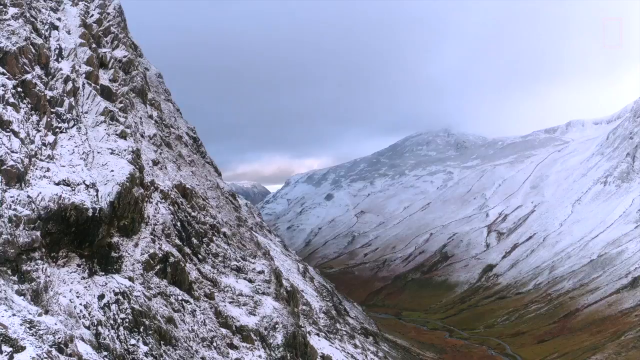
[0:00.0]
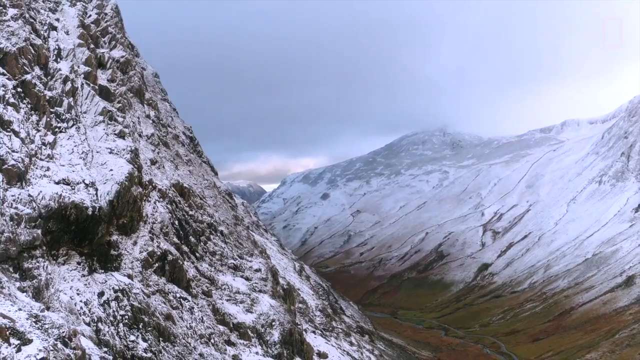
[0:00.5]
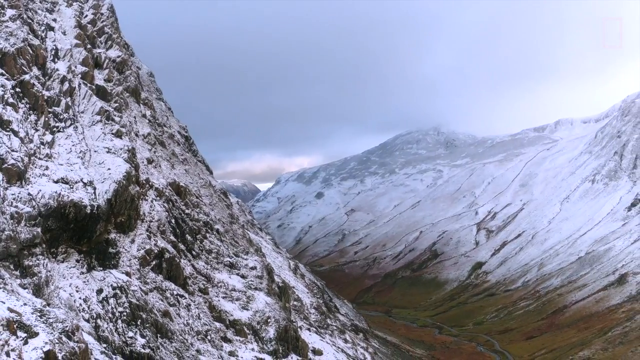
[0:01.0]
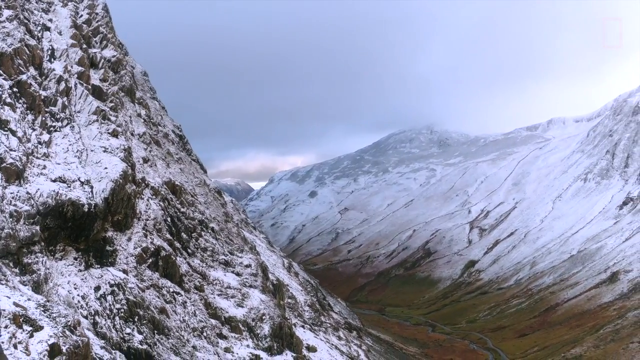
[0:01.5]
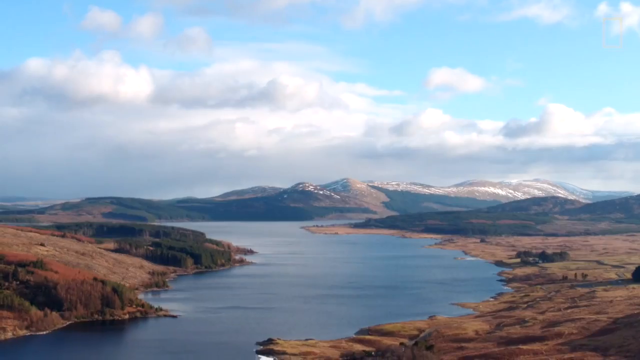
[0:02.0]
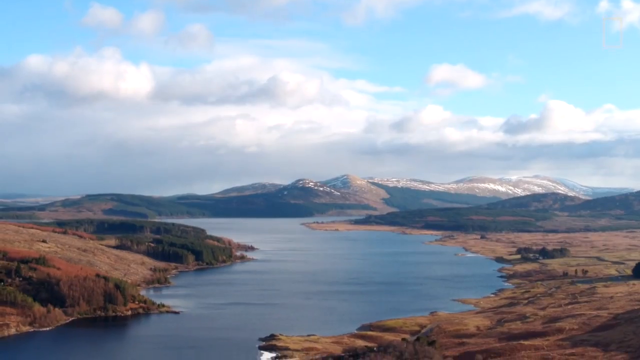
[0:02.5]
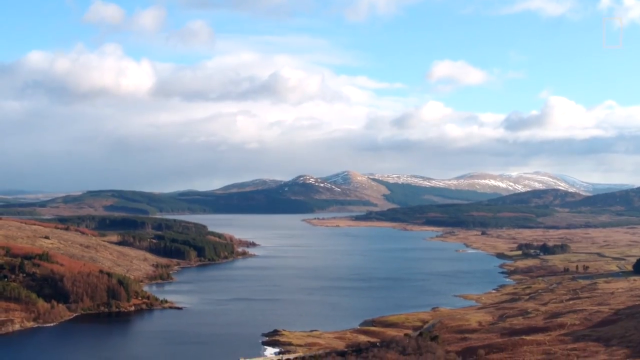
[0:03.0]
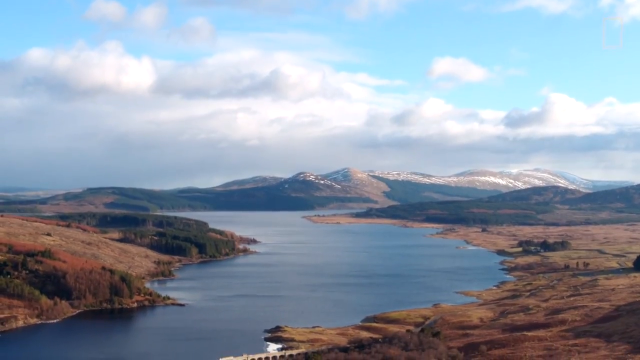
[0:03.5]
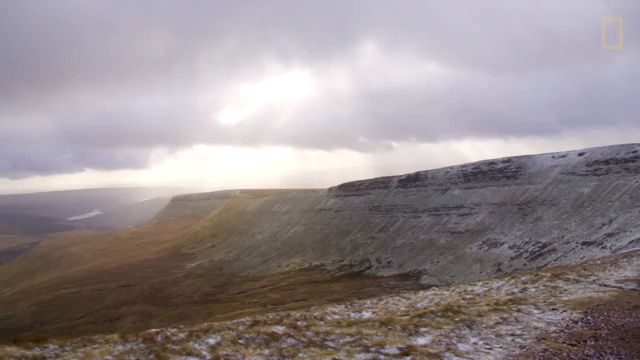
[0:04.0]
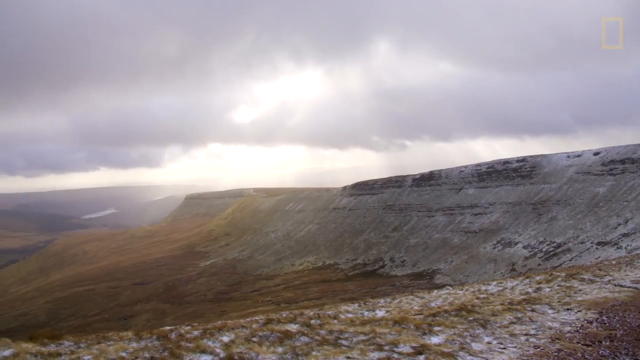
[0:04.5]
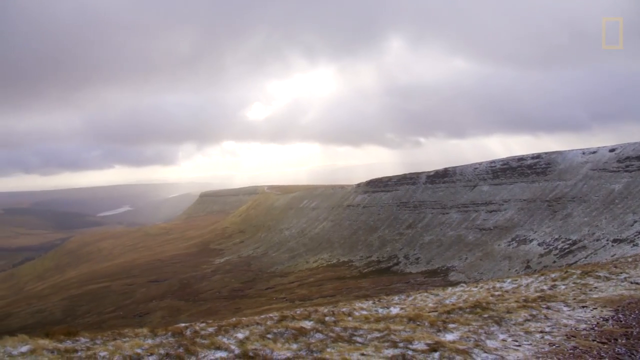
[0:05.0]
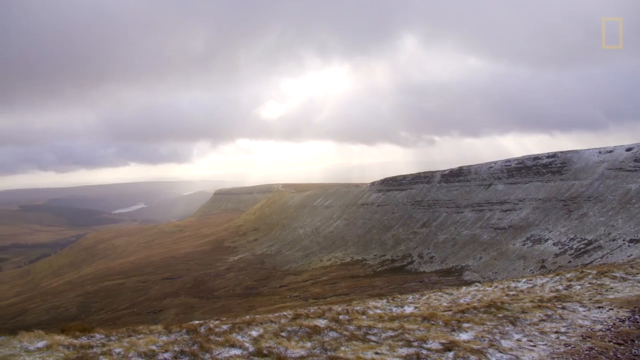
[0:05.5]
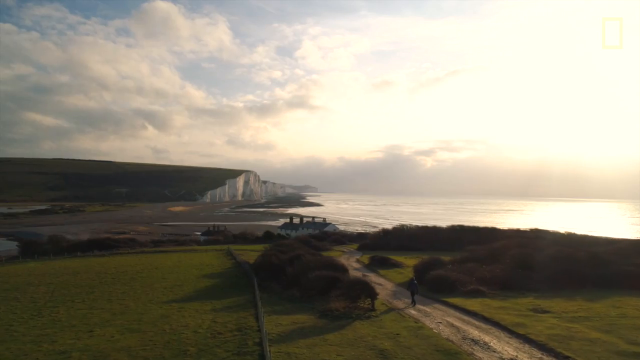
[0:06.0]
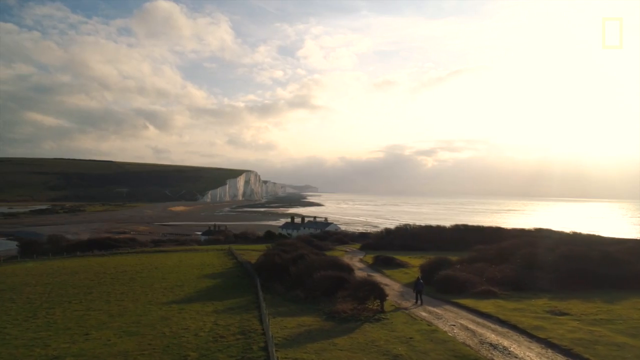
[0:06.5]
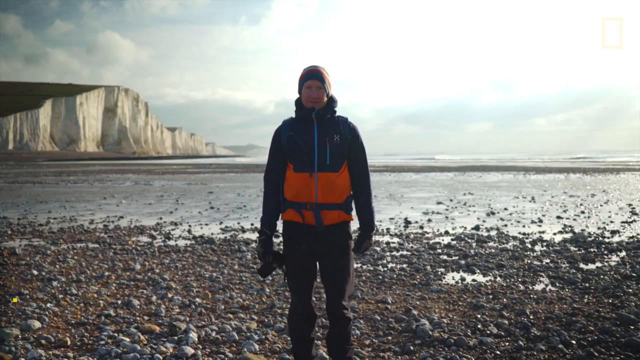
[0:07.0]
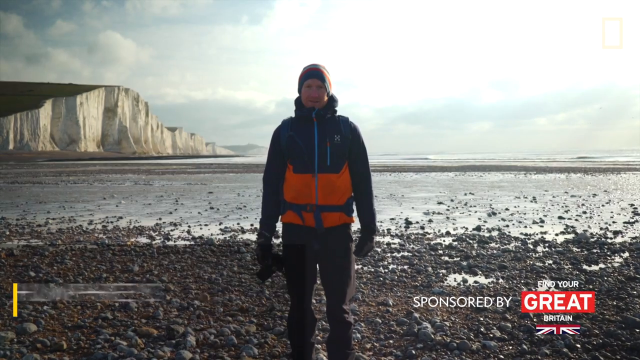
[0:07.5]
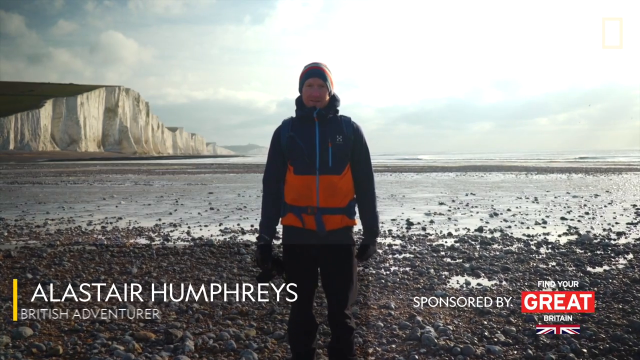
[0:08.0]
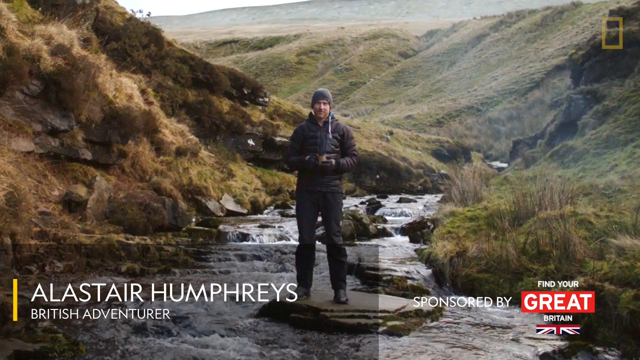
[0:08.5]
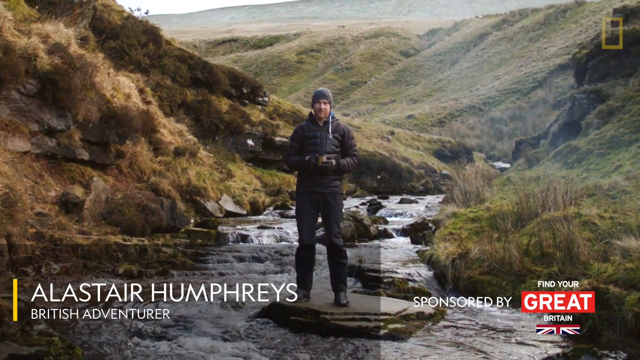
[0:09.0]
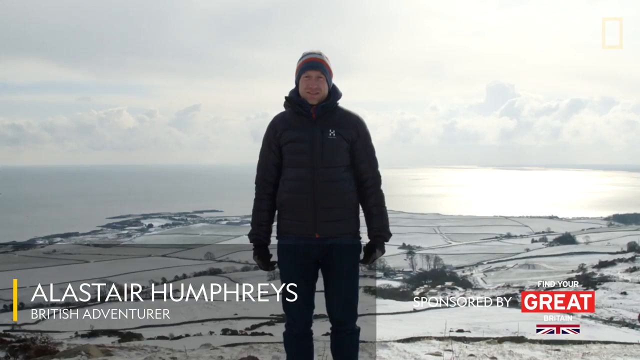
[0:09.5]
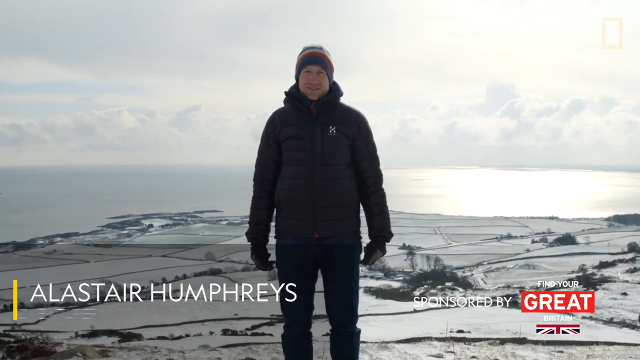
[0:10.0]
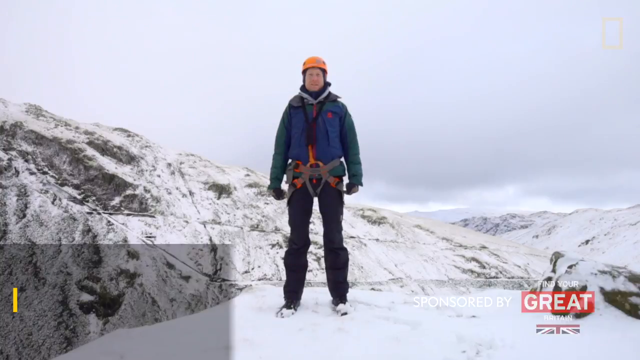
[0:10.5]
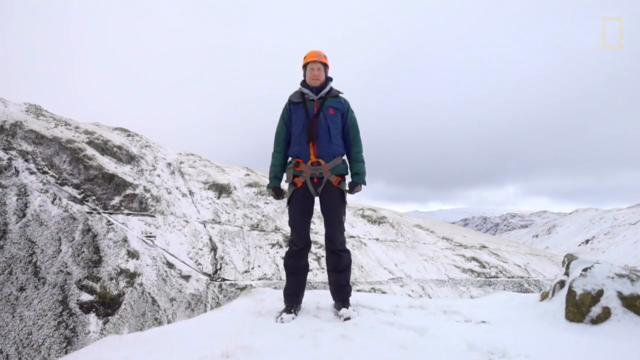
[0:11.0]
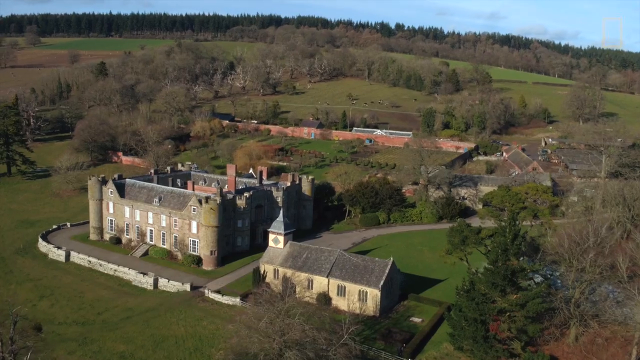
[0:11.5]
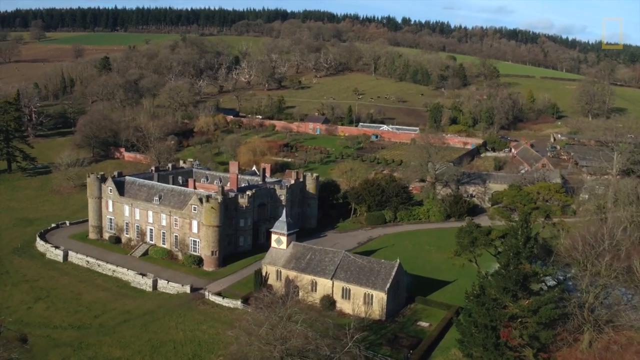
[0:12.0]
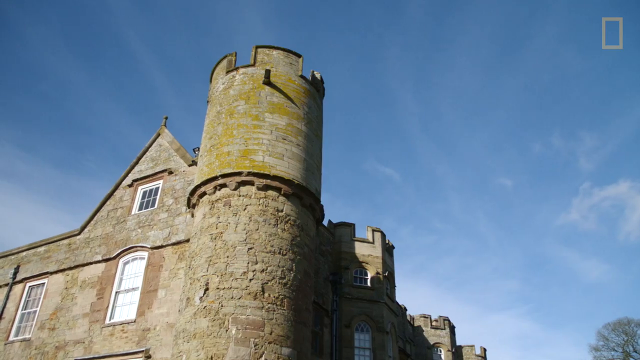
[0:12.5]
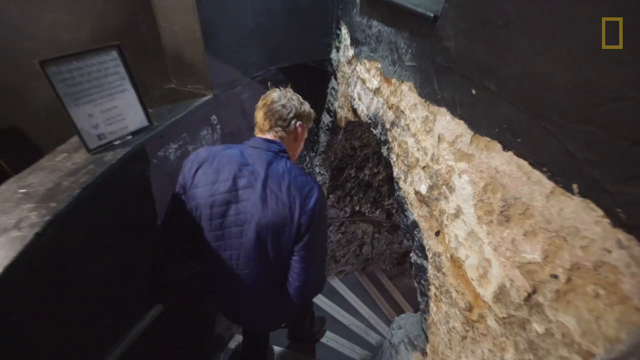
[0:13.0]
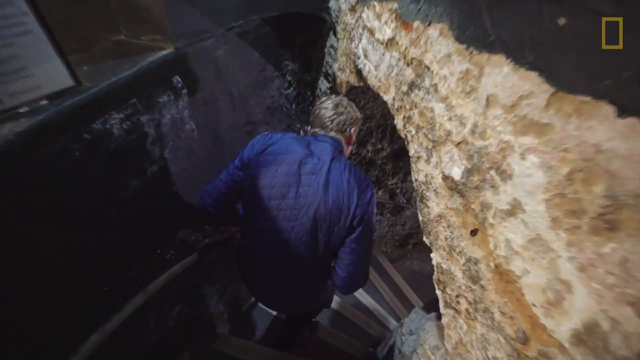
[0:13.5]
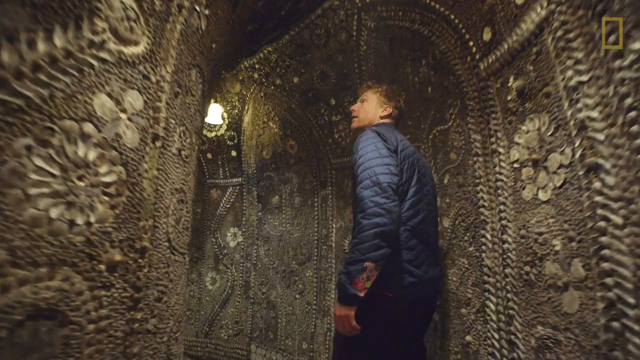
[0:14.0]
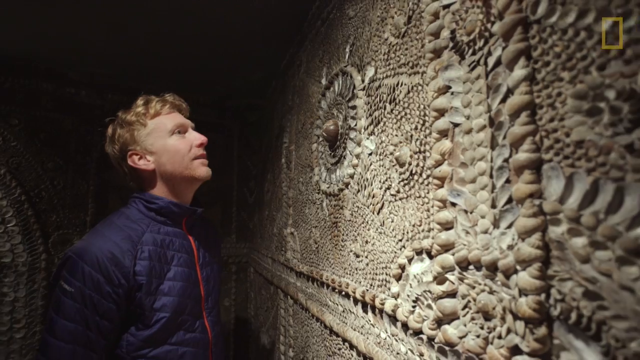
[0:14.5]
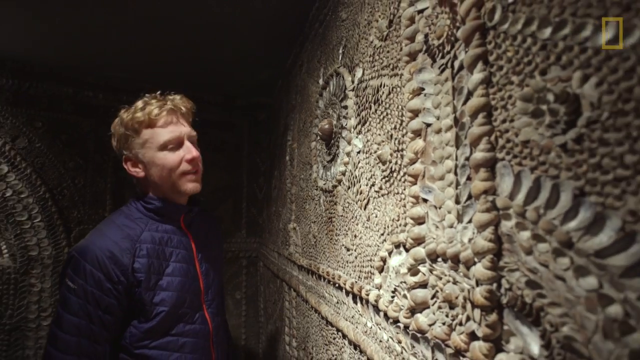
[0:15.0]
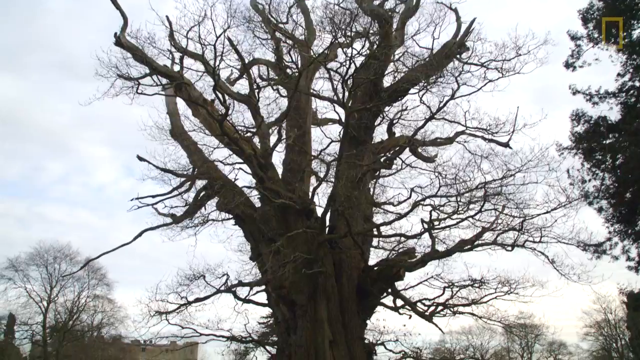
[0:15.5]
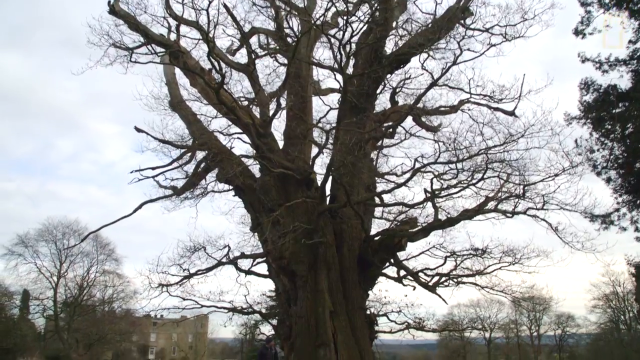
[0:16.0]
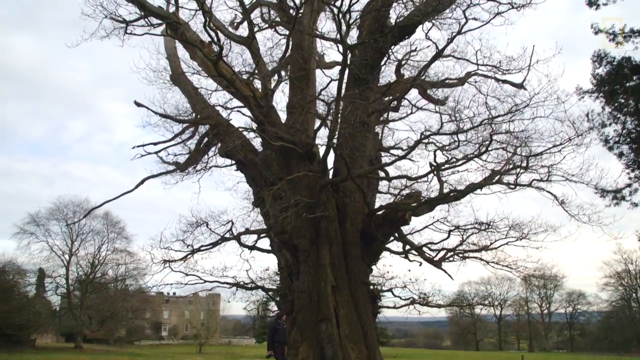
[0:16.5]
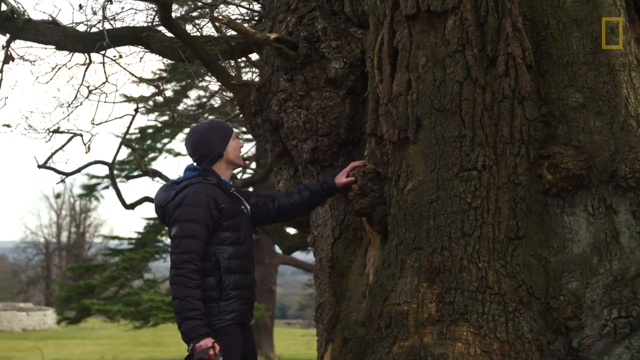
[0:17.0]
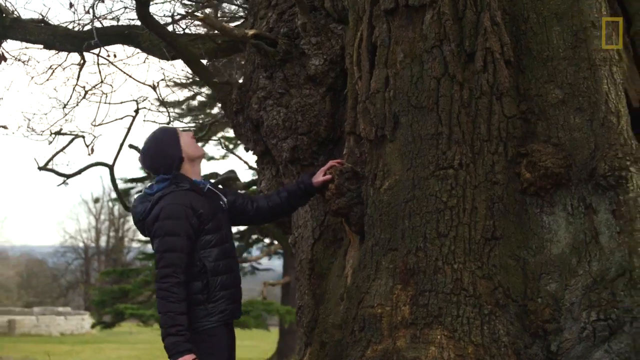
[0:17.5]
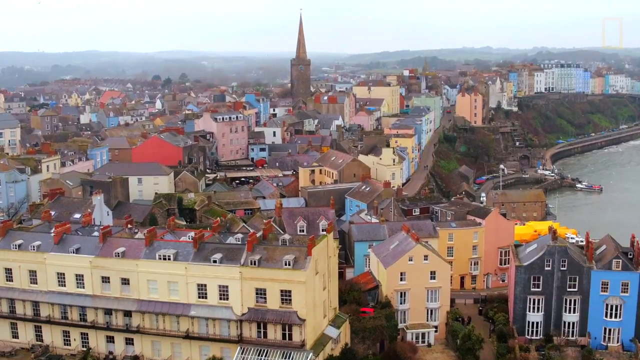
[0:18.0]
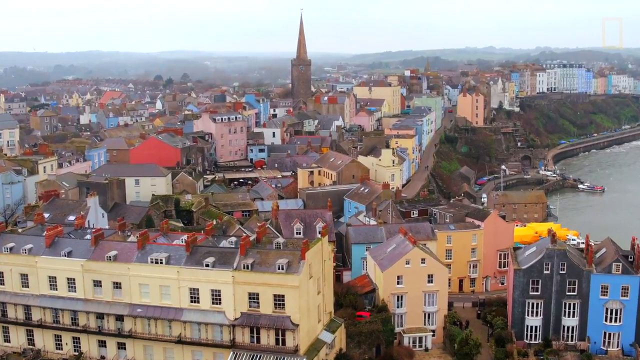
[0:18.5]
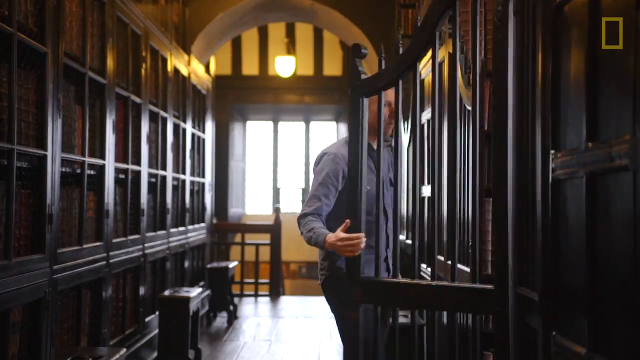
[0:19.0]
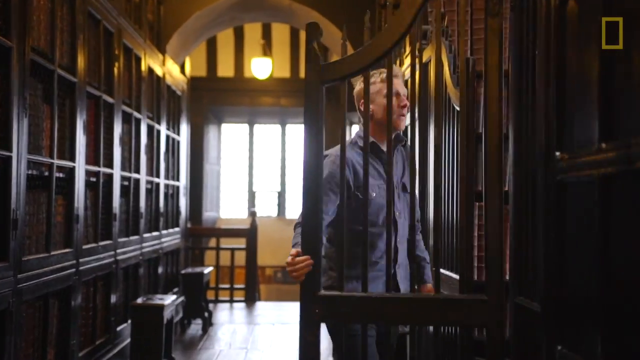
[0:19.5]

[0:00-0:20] The video opens on a mountain view: huge mountains with glacier-type valleys between them in the wintertime. The scene switches to a large mountain range in the background with a huge river flowing down the center of the frame. Different scenes follow, showing places in and around Great Britain. On-screen text identifies the man as "Alastair Humphreys, British adventurer" and indicates the video is sponsored by Find Your Great Britain. He is shown standing in different outdoor areas in both wintertime and summertime, and visiting places such as castles, cities and what seem to be historic churches. At one point he appears to be in Ireland. He travels around places throughout Britain.